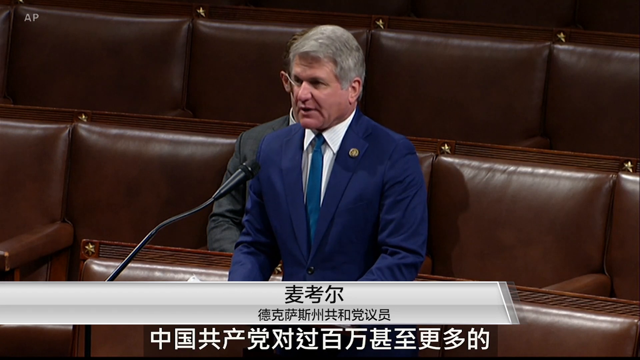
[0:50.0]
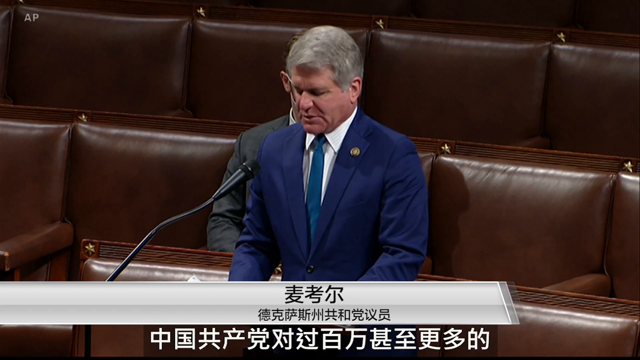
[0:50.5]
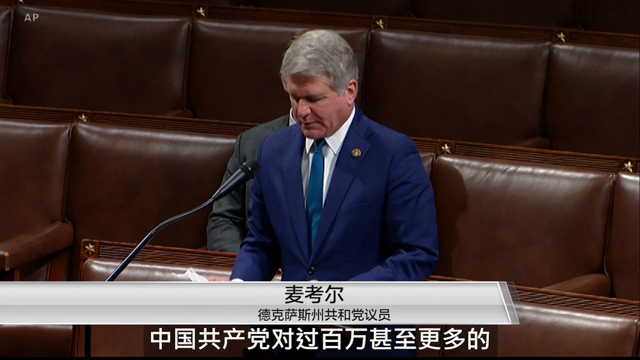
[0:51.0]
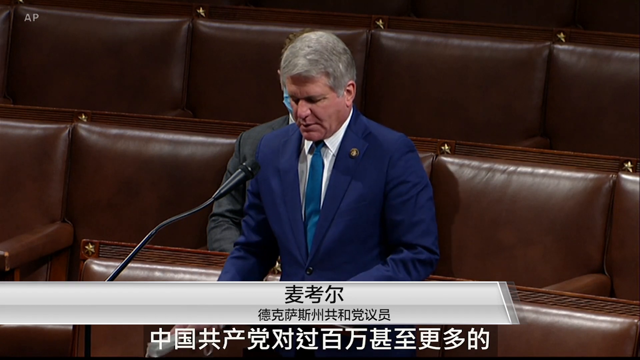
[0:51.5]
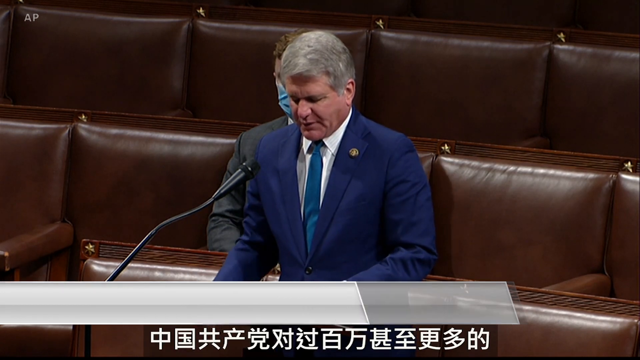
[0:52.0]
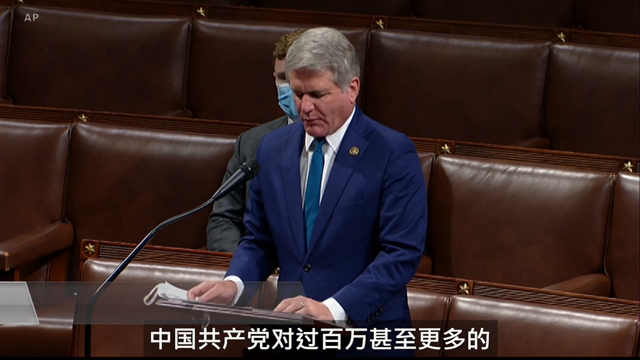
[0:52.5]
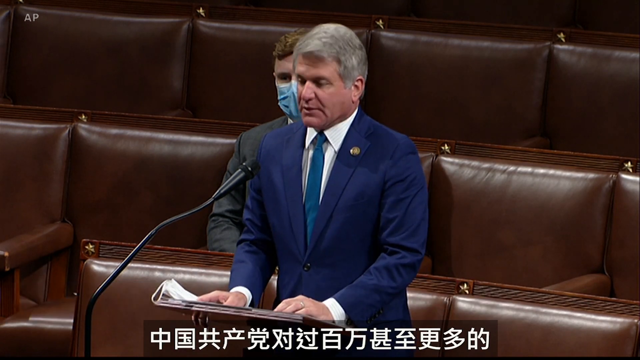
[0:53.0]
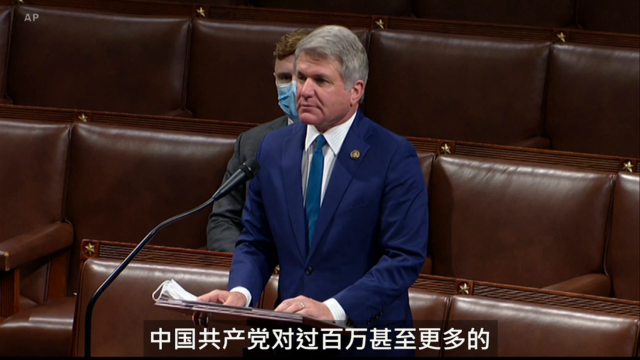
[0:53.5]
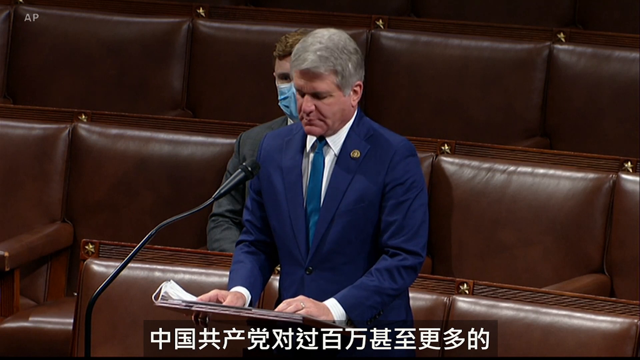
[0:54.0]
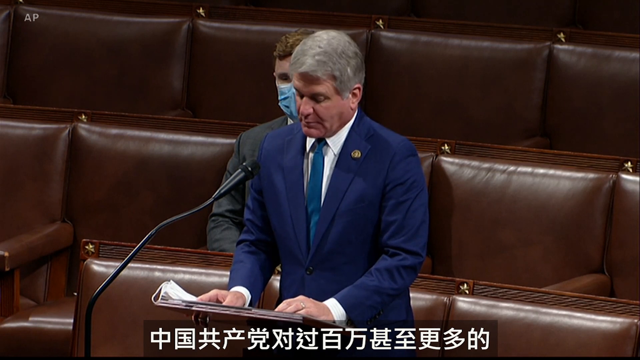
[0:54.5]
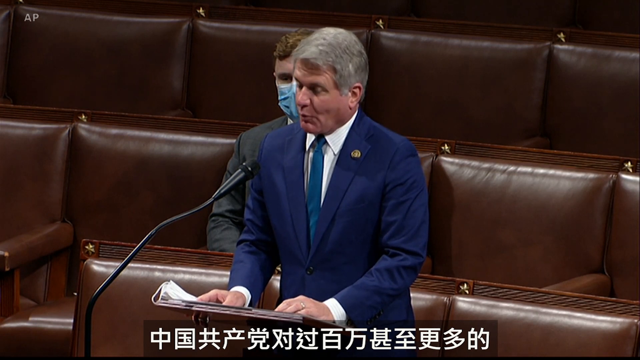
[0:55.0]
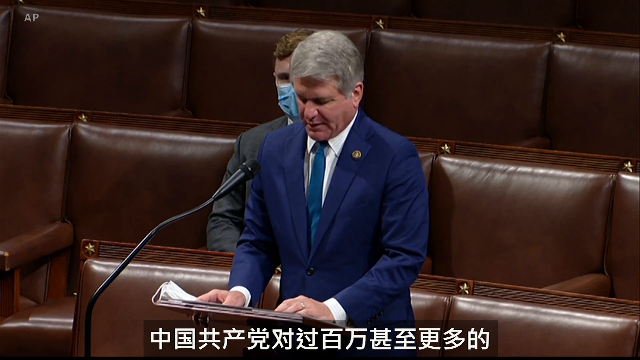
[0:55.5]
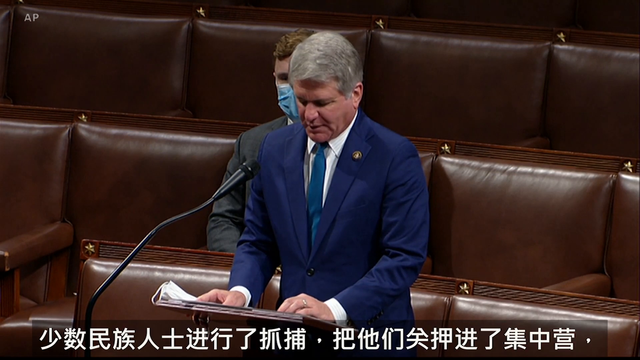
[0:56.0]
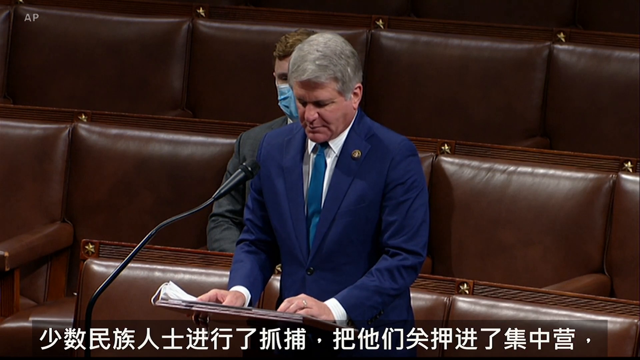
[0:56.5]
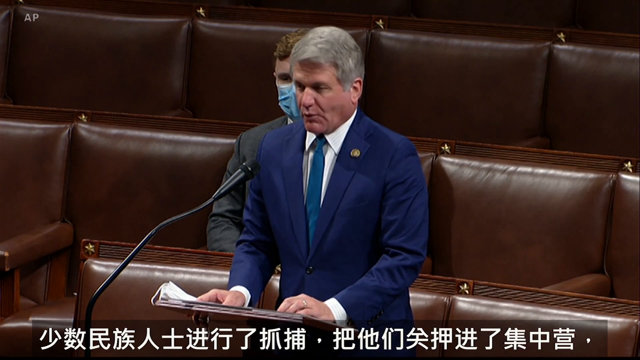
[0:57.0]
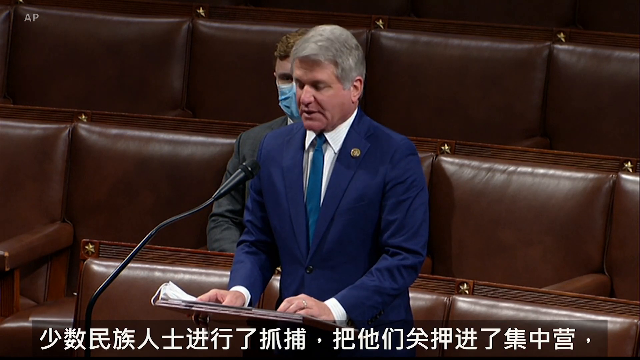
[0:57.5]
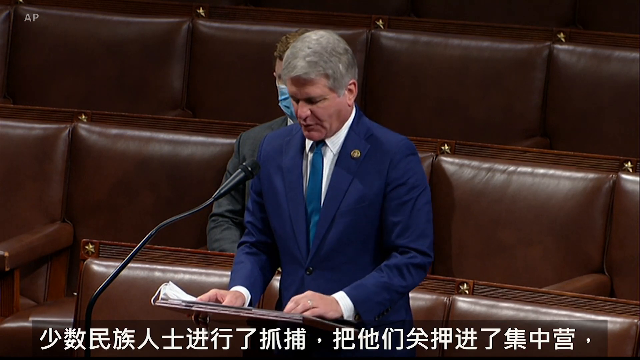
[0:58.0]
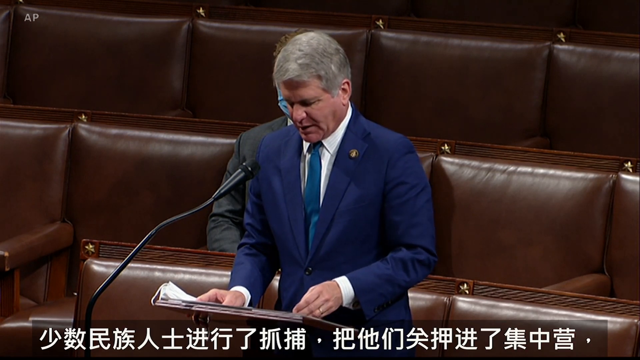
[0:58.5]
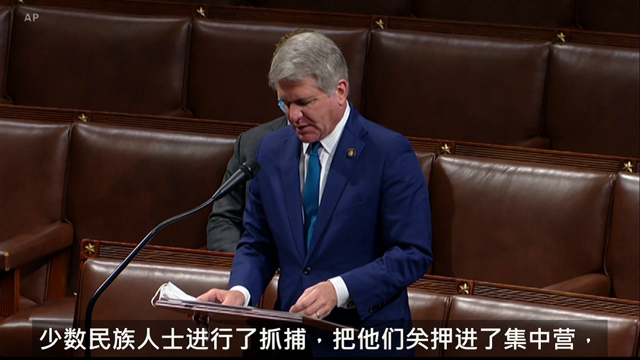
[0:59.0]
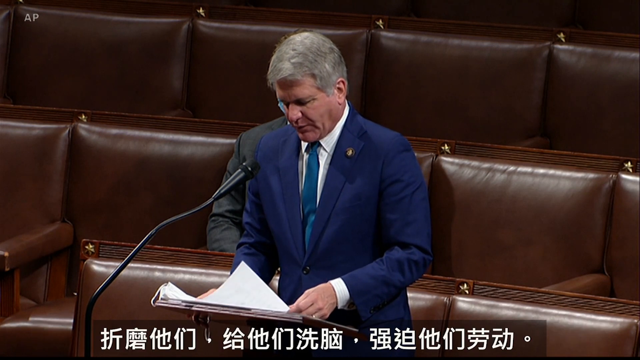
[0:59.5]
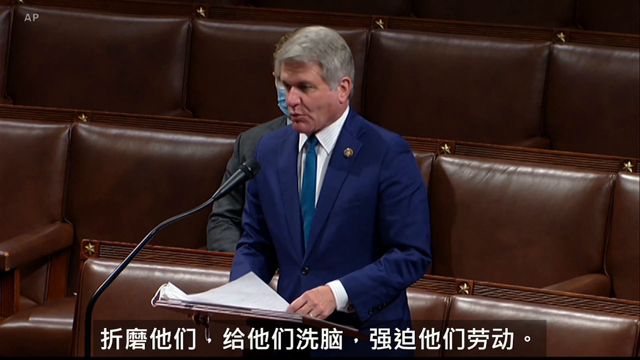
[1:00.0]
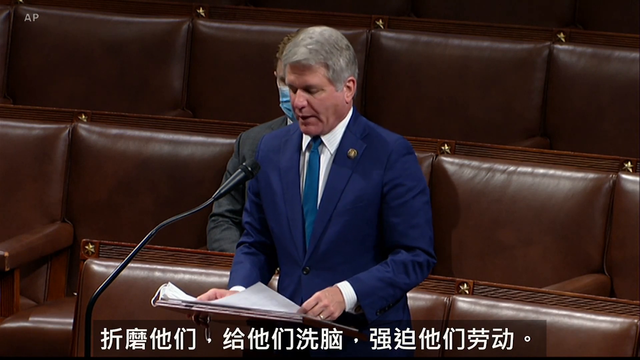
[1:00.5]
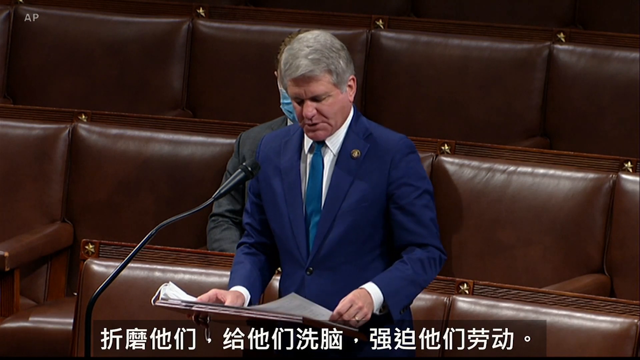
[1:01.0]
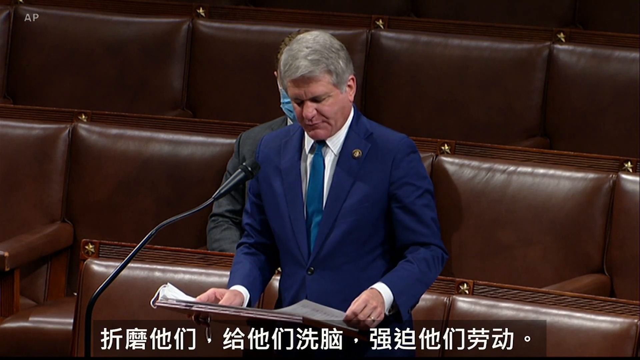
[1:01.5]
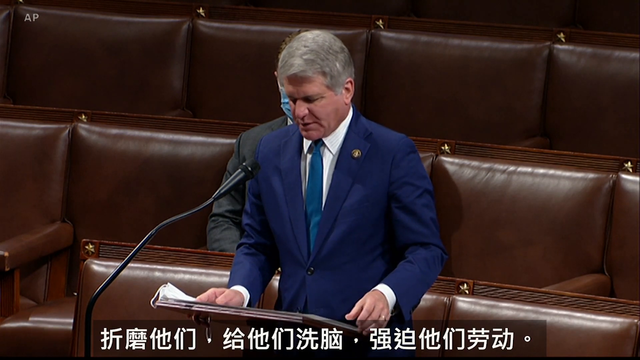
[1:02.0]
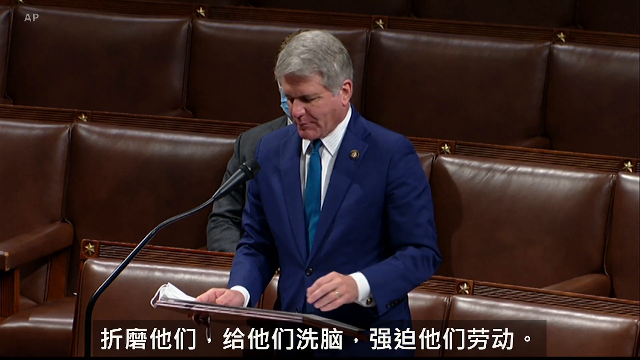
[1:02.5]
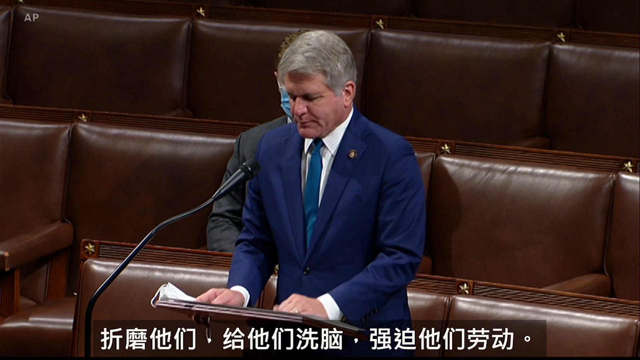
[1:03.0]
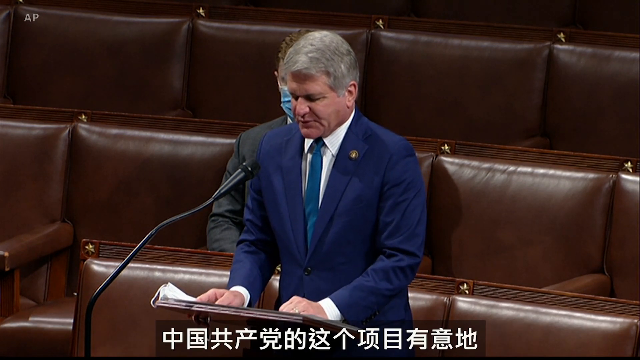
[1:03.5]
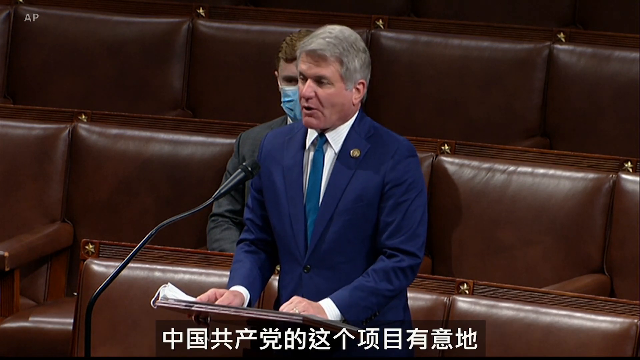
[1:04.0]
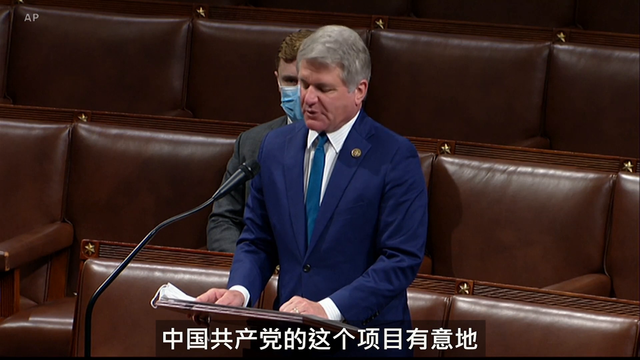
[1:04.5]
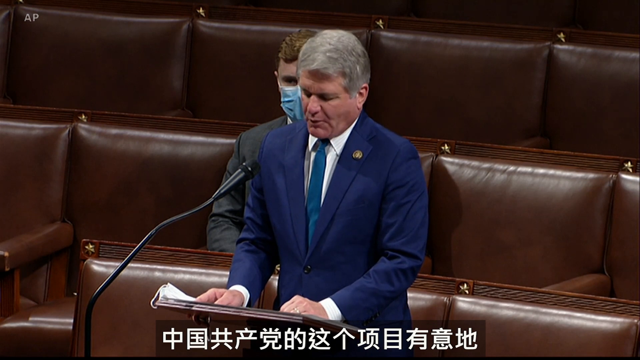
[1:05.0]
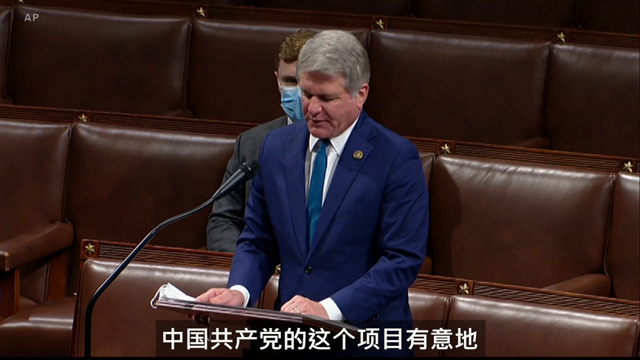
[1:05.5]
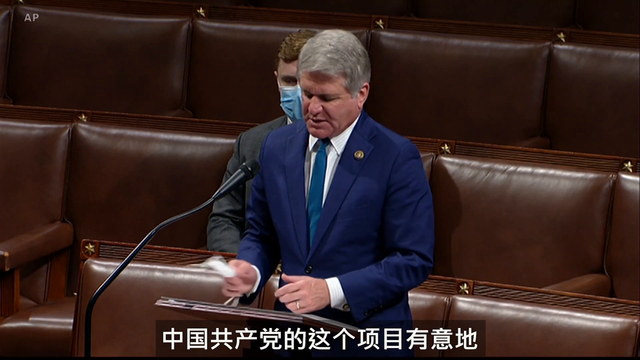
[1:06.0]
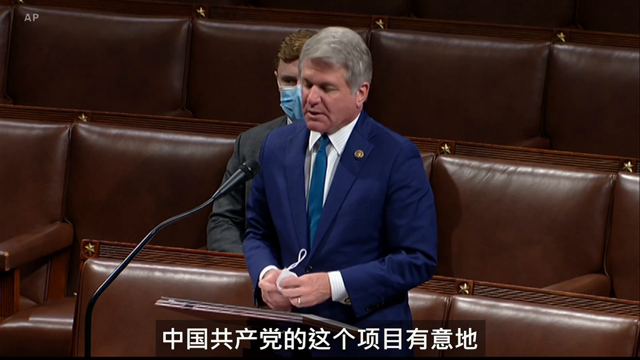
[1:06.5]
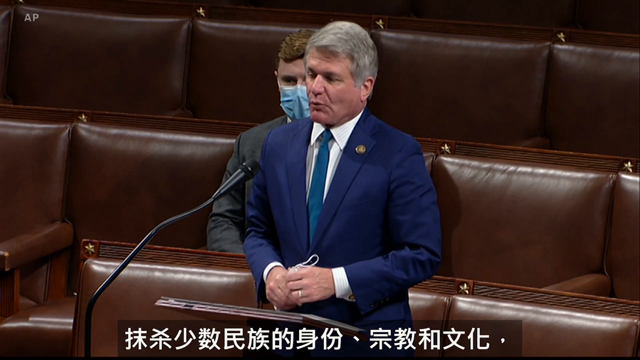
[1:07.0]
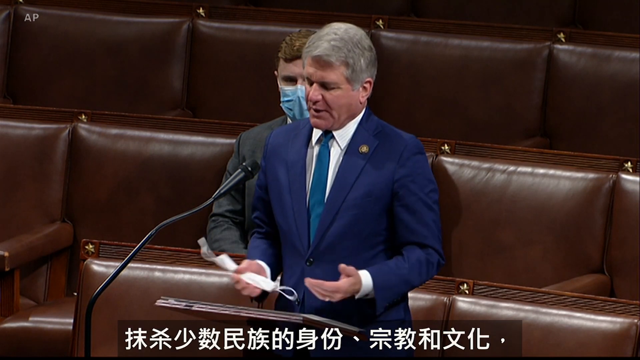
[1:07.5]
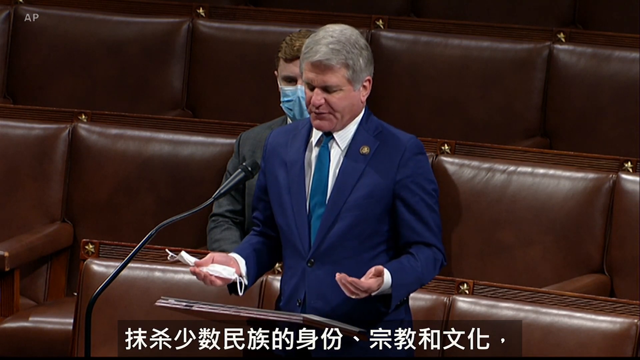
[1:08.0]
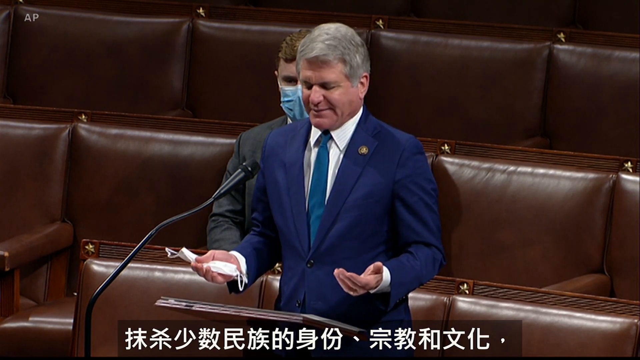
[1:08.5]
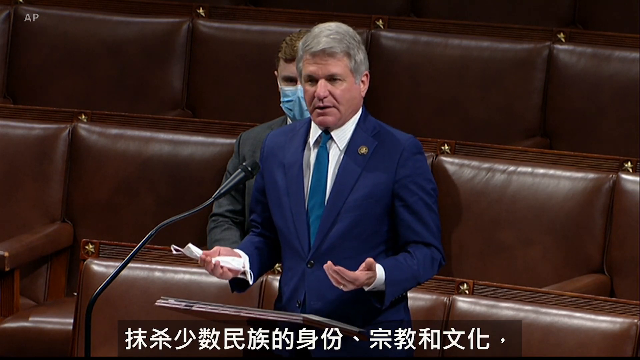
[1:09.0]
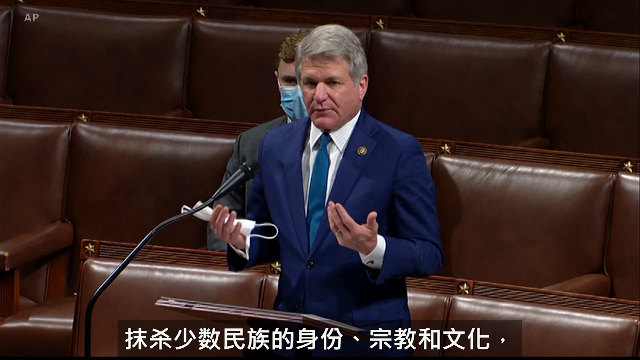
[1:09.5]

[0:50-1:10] The congressman in the blue suit continues speaking to the court. He does not seem pleased; his facial expression is a bit more serious and he seems to speak a bit passionately. Holding his mask in his hand, he looks down at his notes, reading them and looking up at times for emphasis. Another young congressman in a dark grey suit sits behind him with a blue mask on his face. Otherwise the room looks pretty empty, with about four to five empty seats between all of the people, most likely during COVID time given the spacing and masks. The congressman continues reading from his notes as he flips through pages. The caption at the bottom seems to translate what he says into Chinese, as this may be a report from some Chinese news channel. "AP" appears in the top left-hand corner.